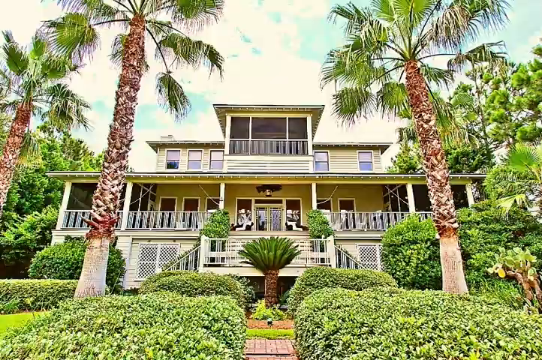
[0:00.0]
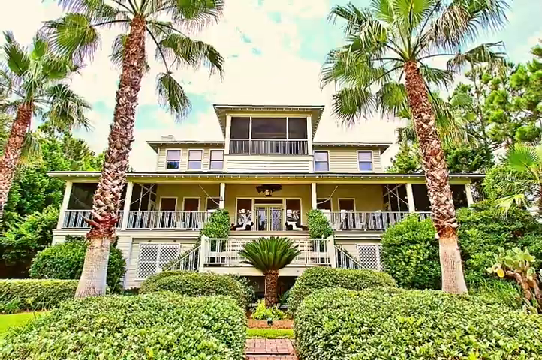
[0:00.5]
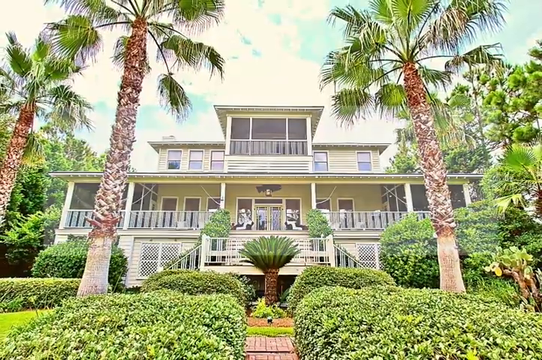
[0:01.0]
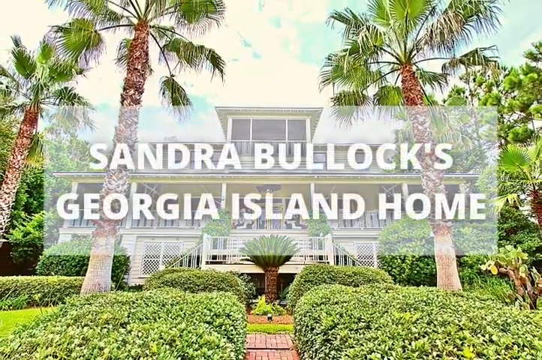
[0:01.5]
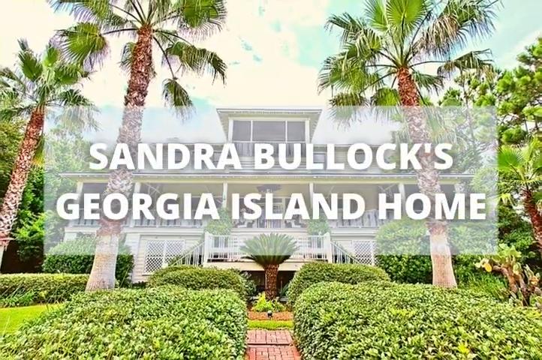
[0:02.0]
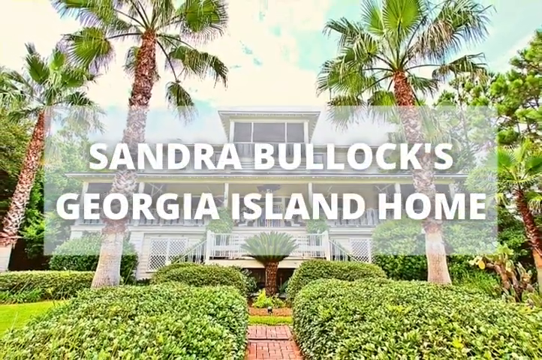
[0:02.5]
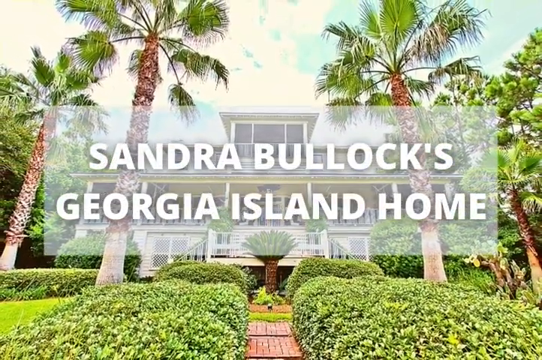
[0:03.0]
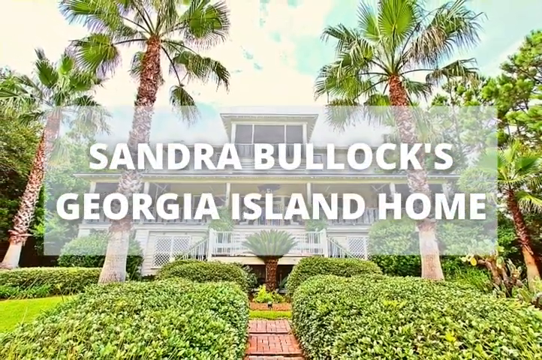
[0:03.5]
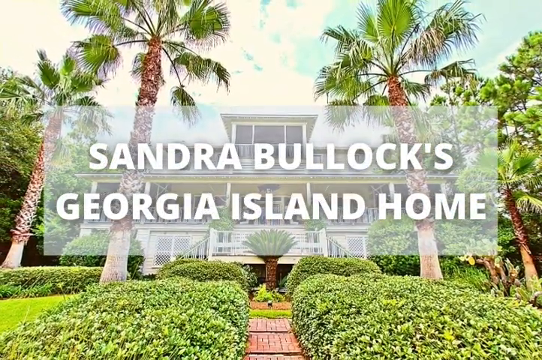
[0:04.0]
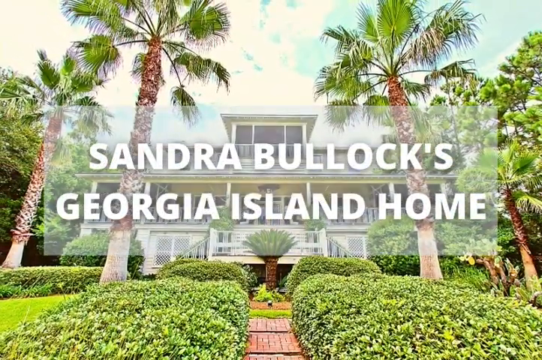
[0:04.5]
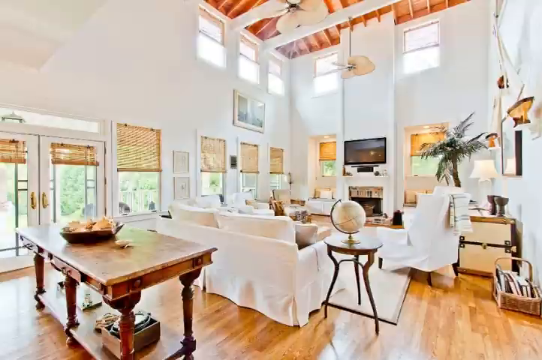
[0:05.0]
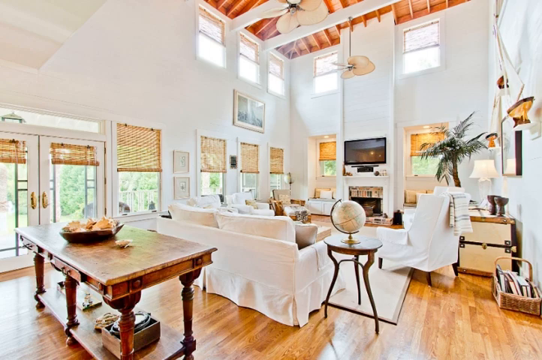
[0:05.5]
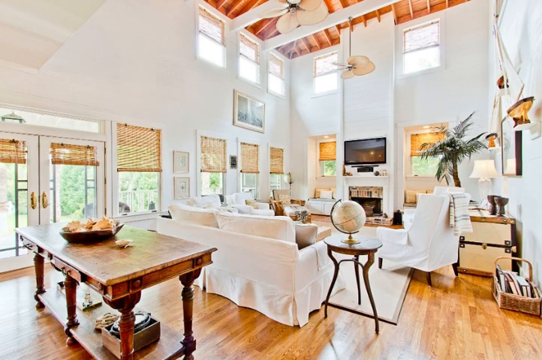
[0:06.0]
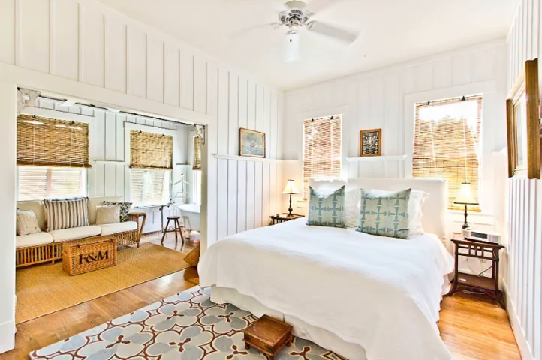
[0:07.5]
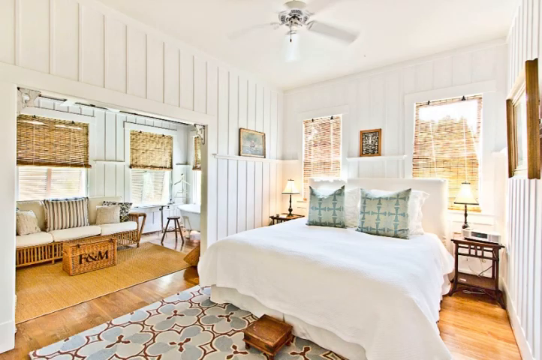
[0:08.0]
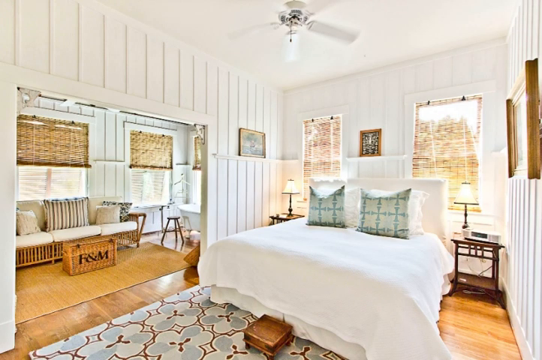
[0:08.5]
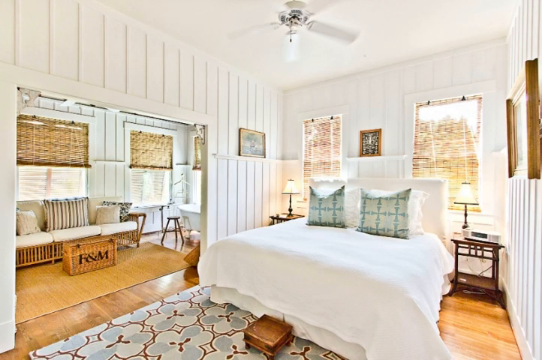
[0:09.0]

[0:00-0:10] A white building that looks to be in a tropical location appears, with what look like three palm trees in front of it and lots of greenery and green hedges around it. White words come up on the screen over this background reading "Sandra Bullock's Georgia Island home." The view then moves inside, apparently into that home, which is all in white: there is a brown table, a white couch and a globe in a light, bright, airy large room with high ceilings that look to be wooden. Next comes the bedroom, with decor similar to the living area, a little sofa area under the window, a double bed with white sheets and patterned pillows, and a ceiling fan. Very briefly, what looks to be the porch area appears, seemingly with wooden floors, before it quickly flashes off. The video seems to be a tour of the home's various areas.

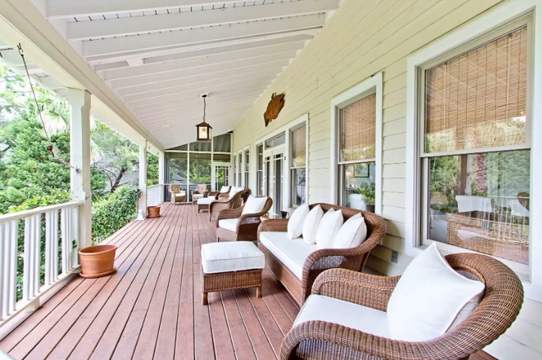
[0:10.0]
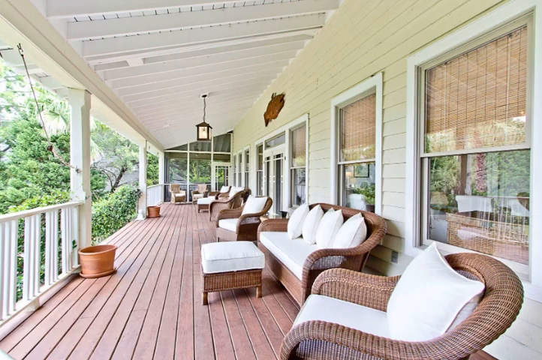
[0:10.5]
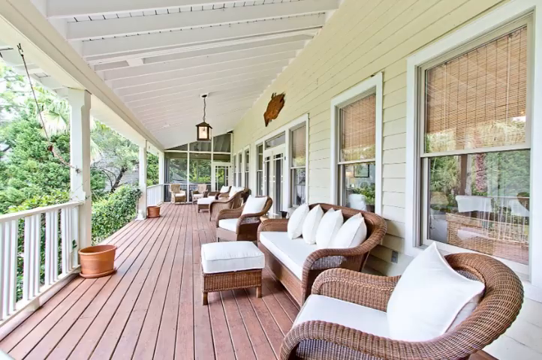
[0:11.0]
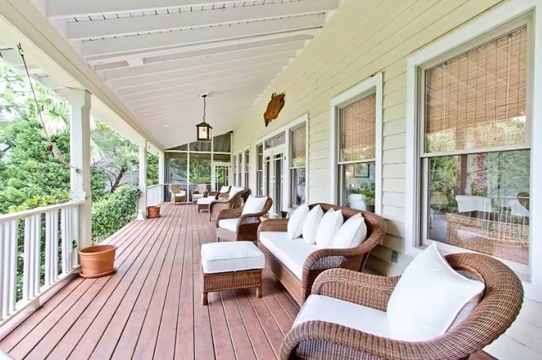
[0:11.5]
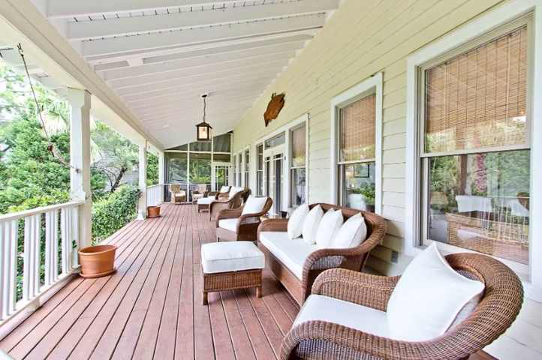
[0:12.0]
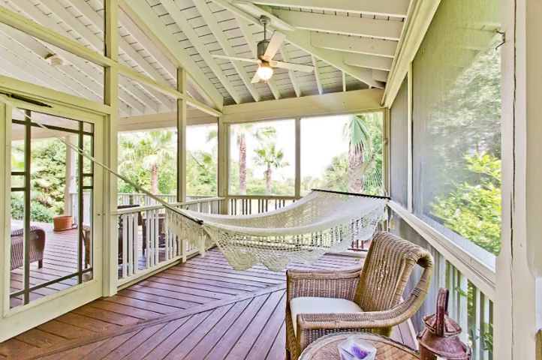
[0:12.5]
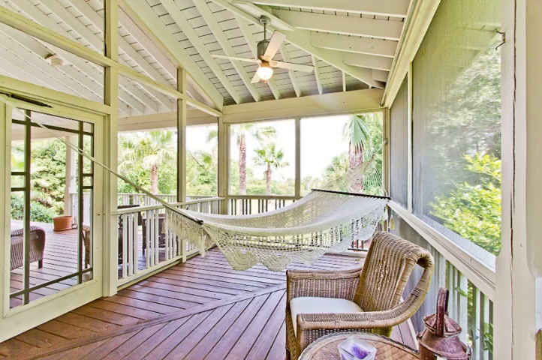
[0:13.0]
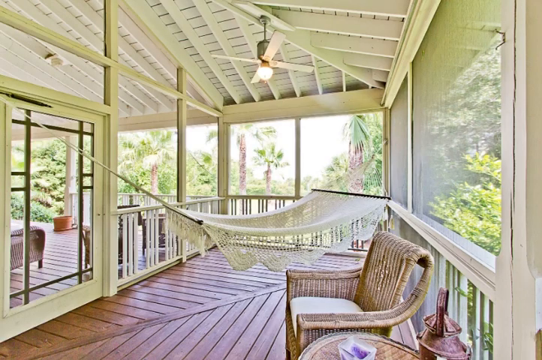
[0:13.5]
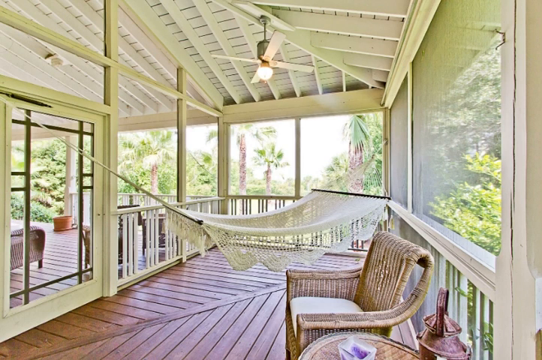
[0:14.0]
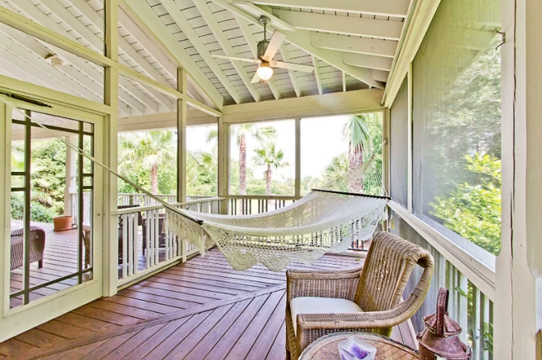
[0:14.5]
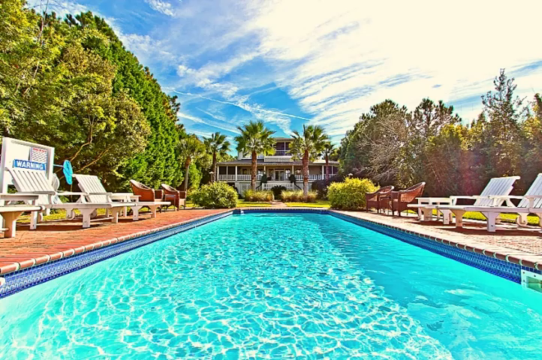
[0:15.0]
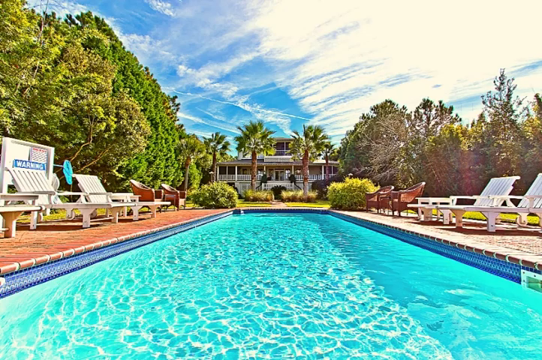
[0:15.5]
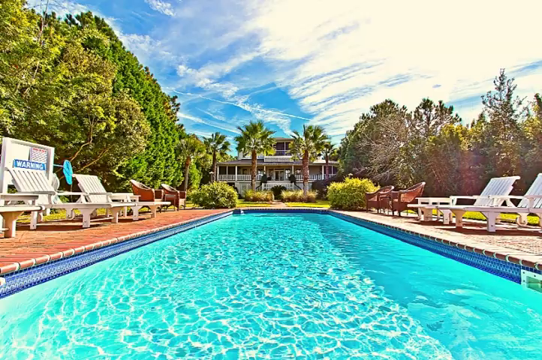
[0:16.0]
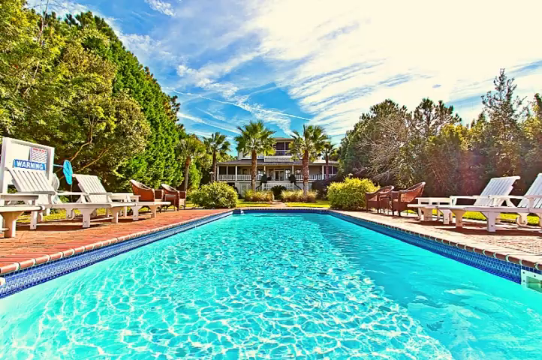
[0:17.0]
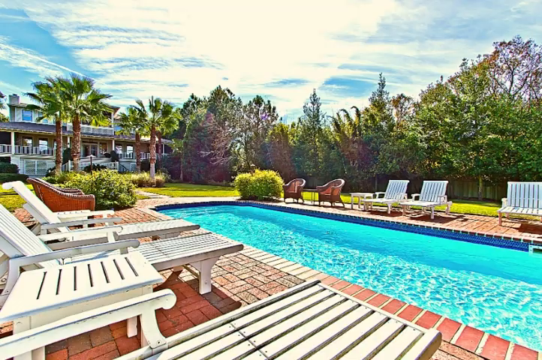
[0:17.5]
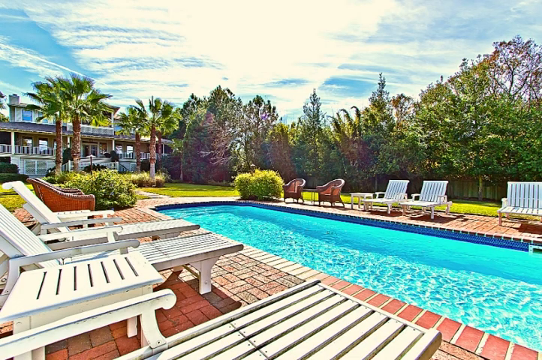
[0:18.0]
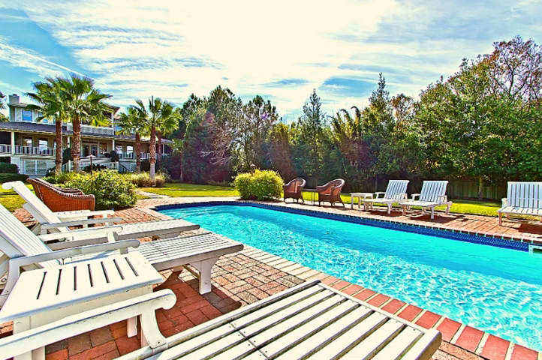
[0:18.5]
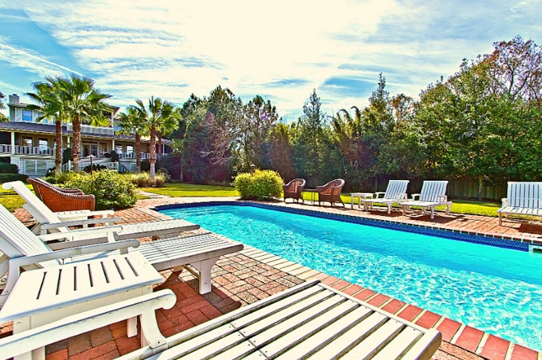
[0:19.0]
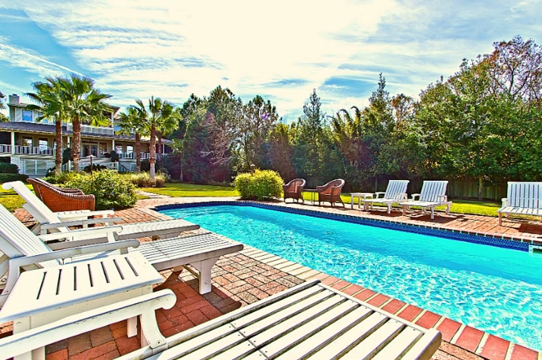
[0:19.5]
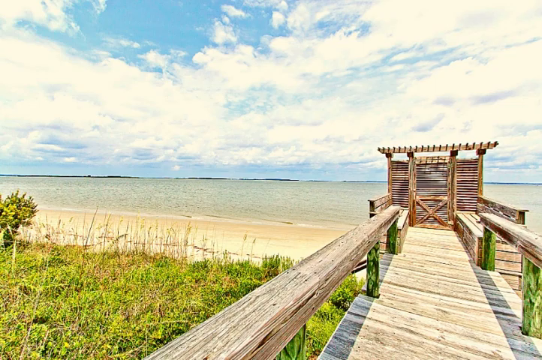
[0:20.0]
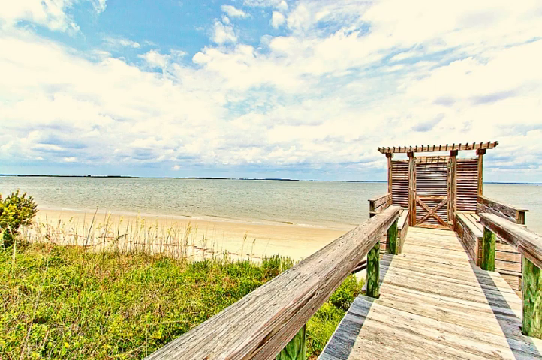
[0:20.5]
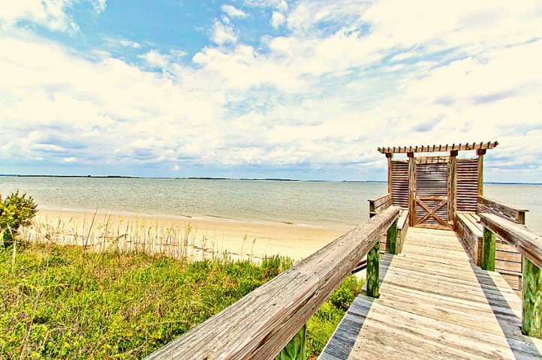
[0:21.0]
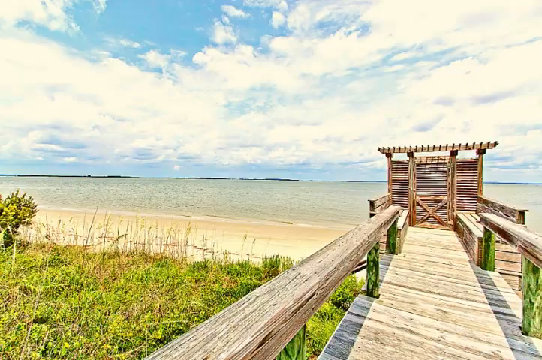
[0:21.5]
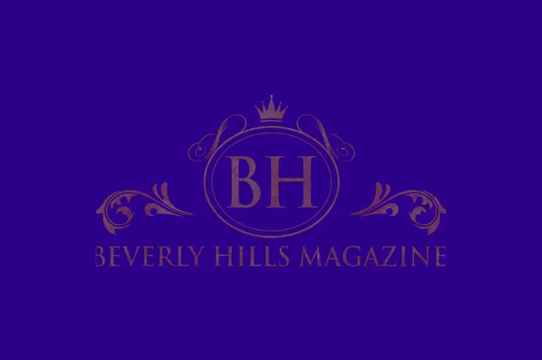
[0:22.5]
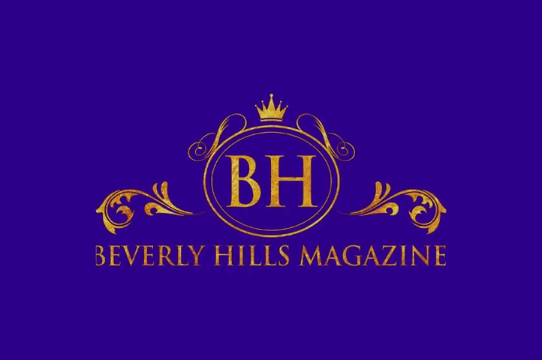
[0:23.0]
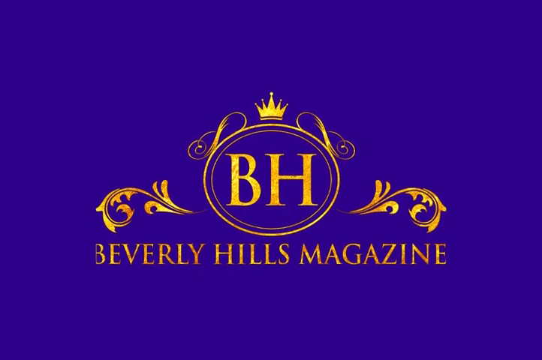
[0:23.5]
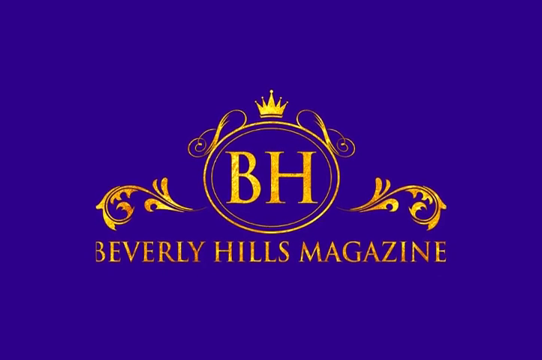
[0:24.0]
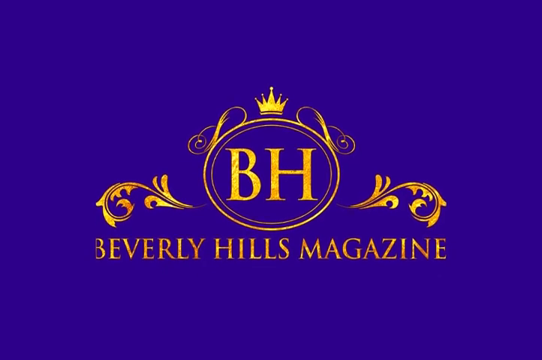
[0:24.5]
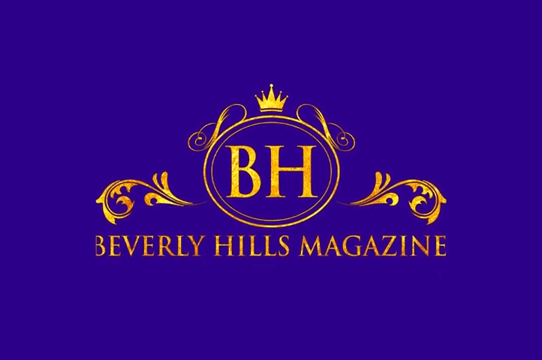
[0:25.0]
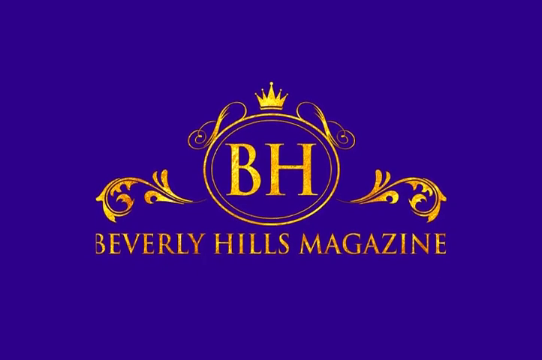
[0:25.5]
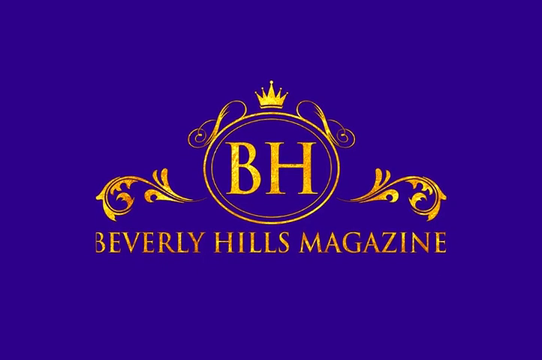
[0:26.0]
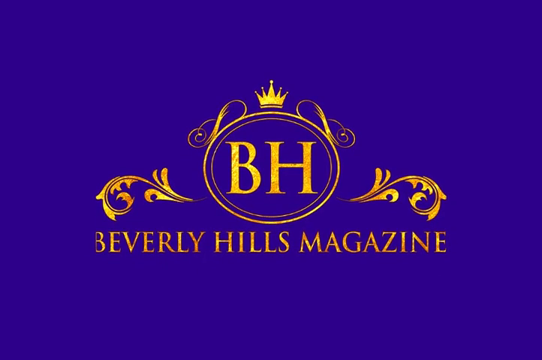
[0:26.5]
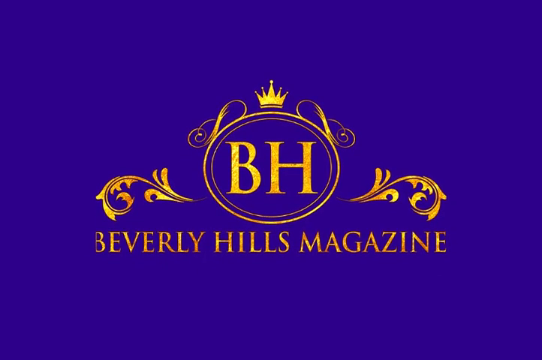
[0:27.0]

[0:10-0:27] What looks to be a large porch area of a home has brown wooden floors and several what look to be brown wicker sofas with several white pillows, plus a white seating area with a matching footstool. The view moves to another porch-like area that seems to be a very light green colour, with what looks to be a hammock hanging in the middle, a single wicker chair with a white cushion on it at the bottom, and a ceiling fan. Then the scene moves outdoors: the home, apparently Sandra Bullock's, is in the distance, and there is a large swimming pool filled with pure blue water, with the sun seeming to shine overhead and make the pool shine. Lots of green trees are all around, and lots of white deck chairs and brown chairs surround the very large pool, with palm trees and the house in the distance. The view continues around the pool from a different angle, showing the deck chairs, the pool area and the trees in the background. Next is a view out onto either a large lake or the sea, with a sort of wooden bridge leading up to the water, suggesting the house is perhaps by the sea or a lake. Finally, a solid purple background with gold on it appears, showing "BH" in gold with a crown on top, and beneath that "Beverly Hills magazine." It seems to be a tour of Sandra Bullock's home inside and outside by Beverly Hills magazine.